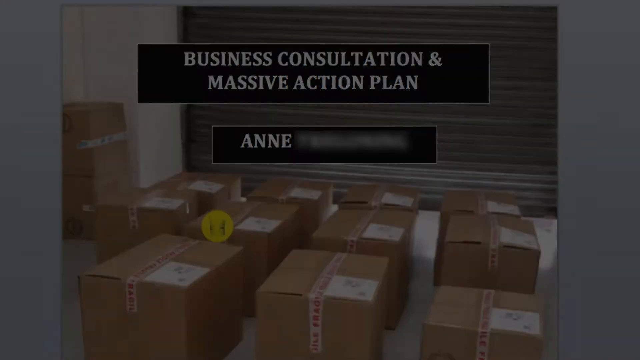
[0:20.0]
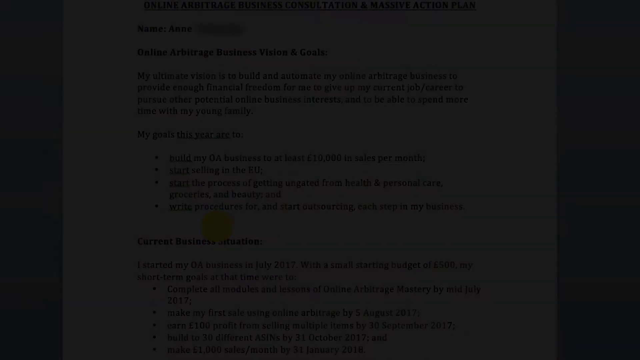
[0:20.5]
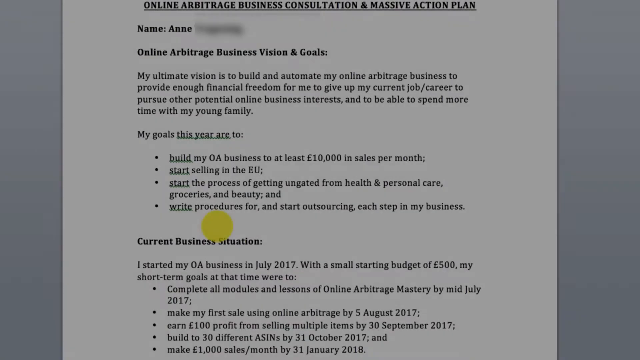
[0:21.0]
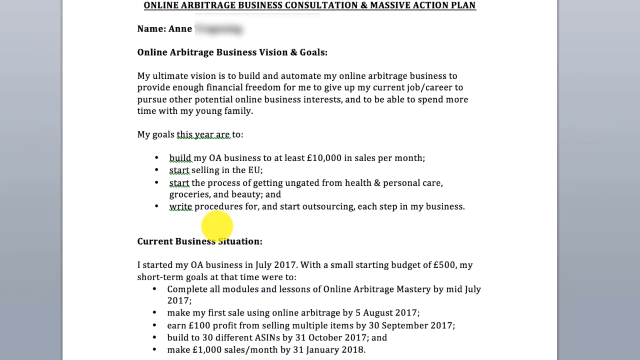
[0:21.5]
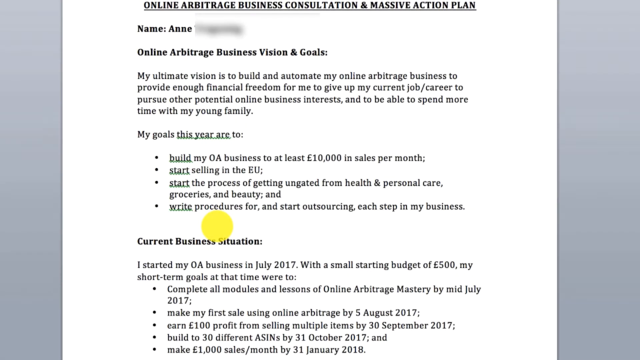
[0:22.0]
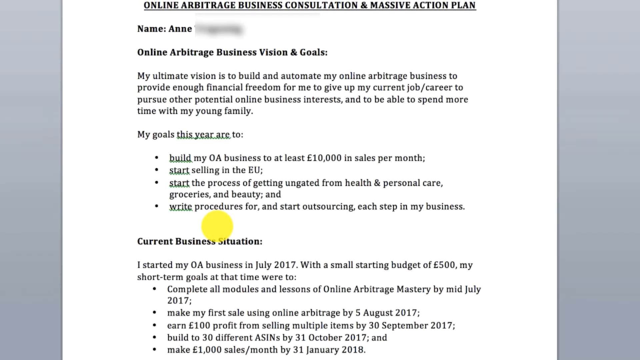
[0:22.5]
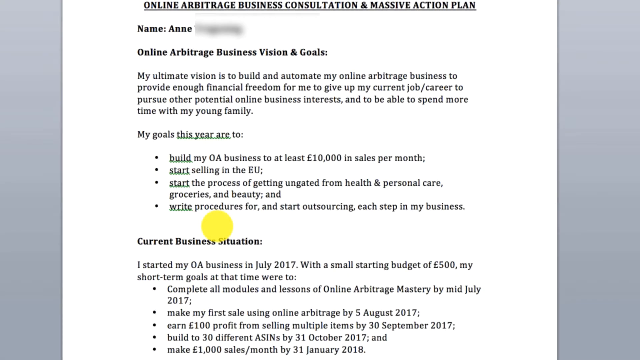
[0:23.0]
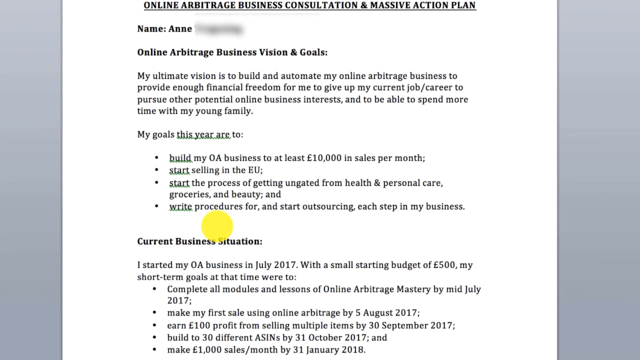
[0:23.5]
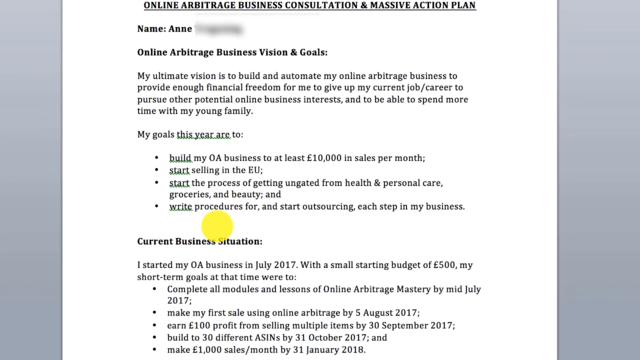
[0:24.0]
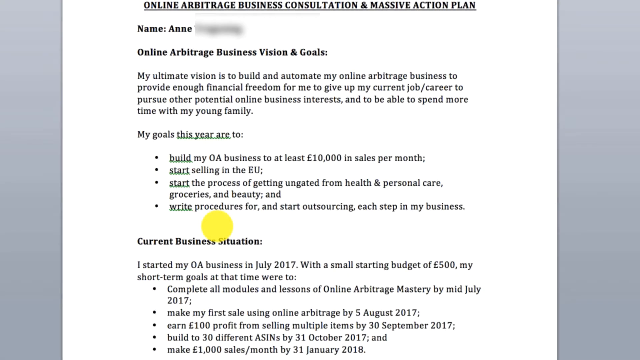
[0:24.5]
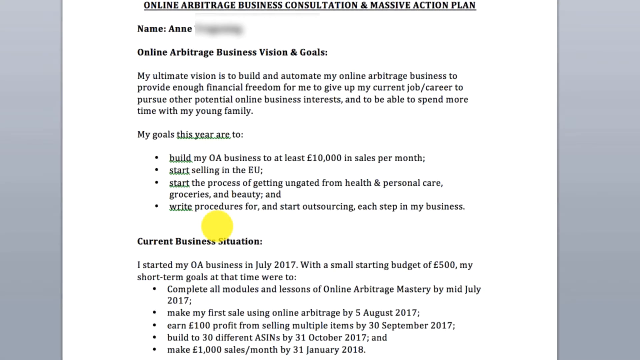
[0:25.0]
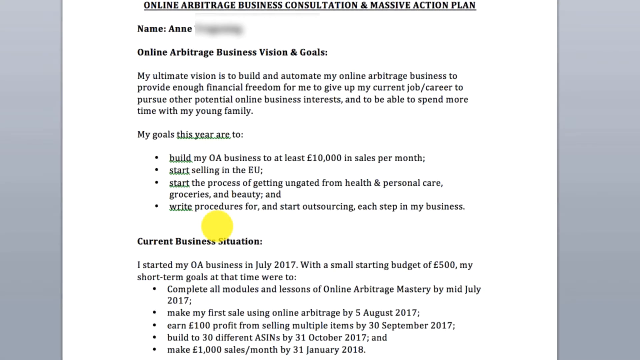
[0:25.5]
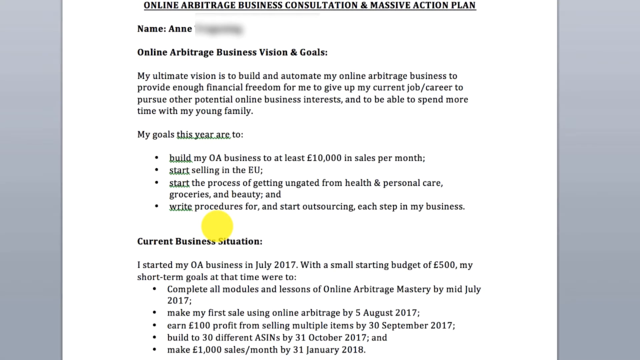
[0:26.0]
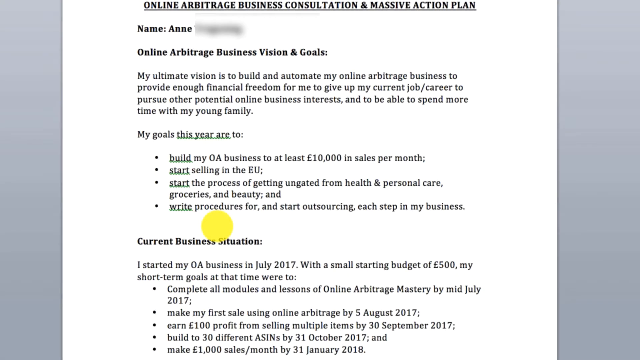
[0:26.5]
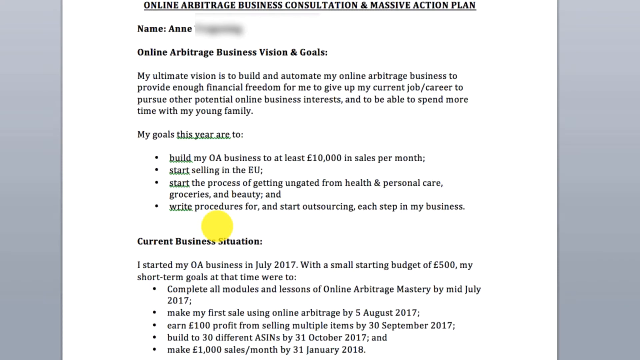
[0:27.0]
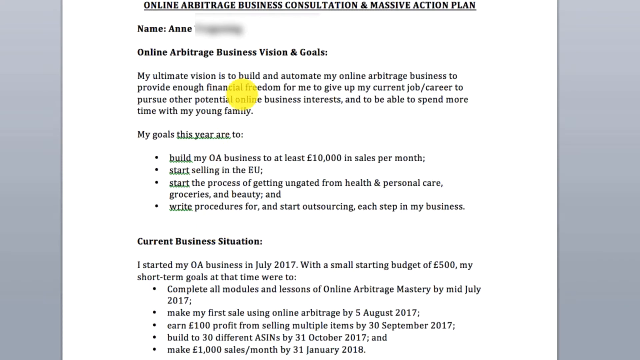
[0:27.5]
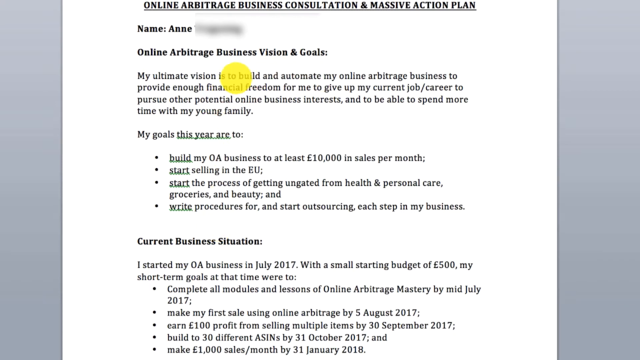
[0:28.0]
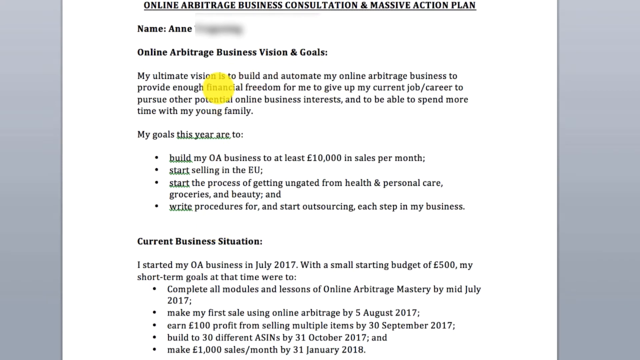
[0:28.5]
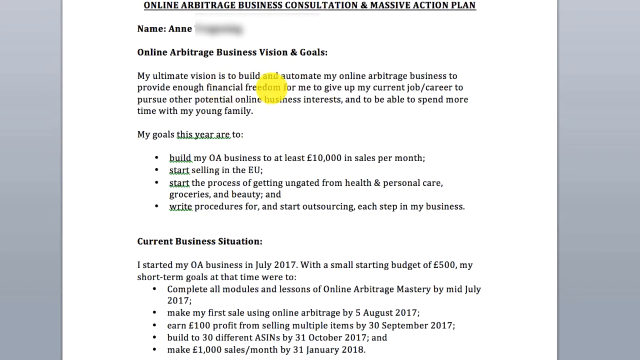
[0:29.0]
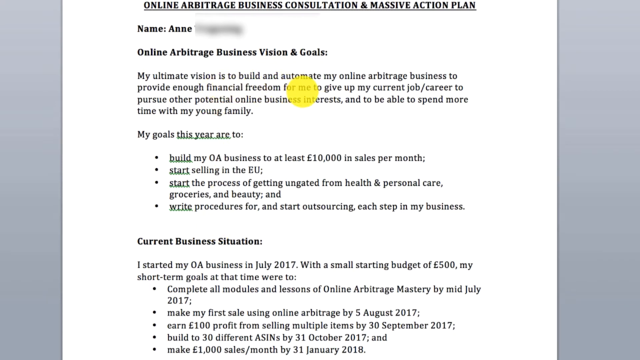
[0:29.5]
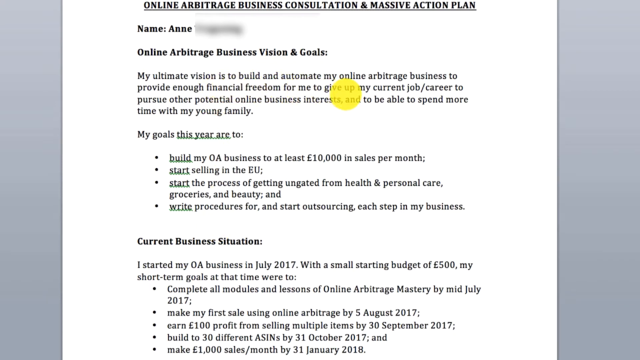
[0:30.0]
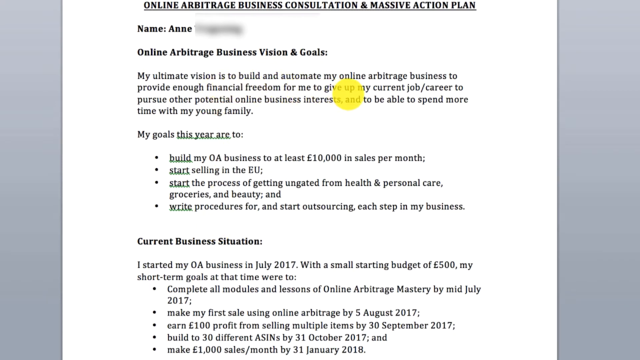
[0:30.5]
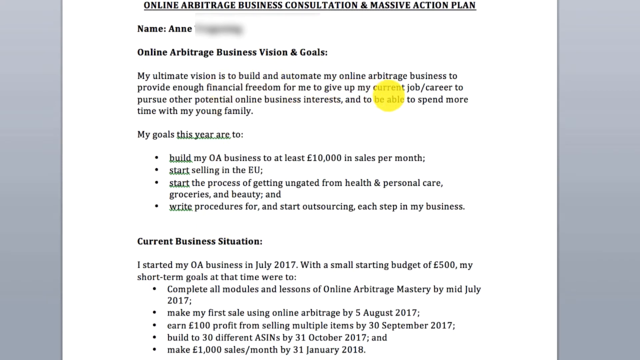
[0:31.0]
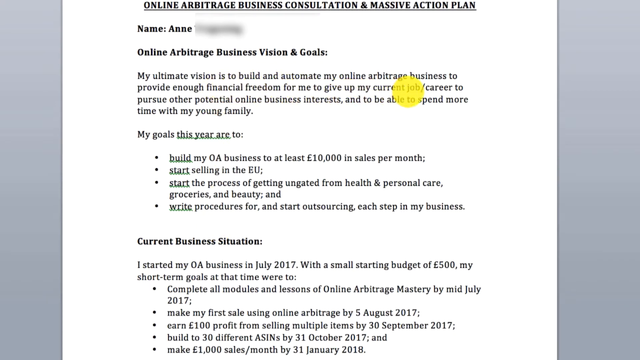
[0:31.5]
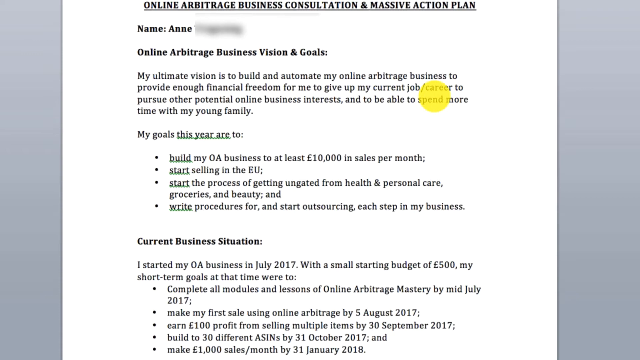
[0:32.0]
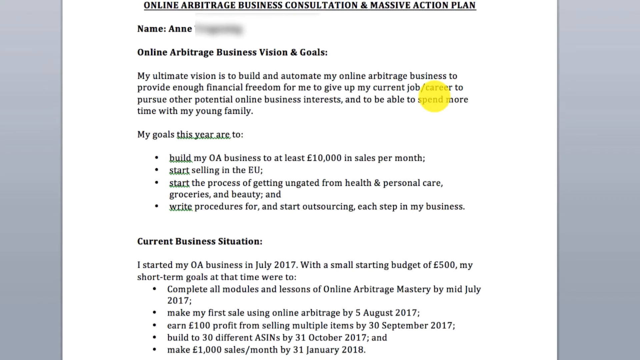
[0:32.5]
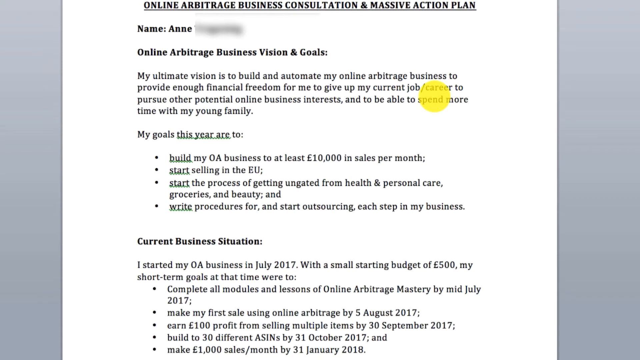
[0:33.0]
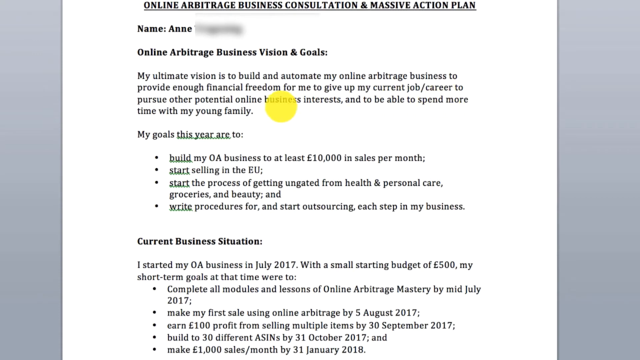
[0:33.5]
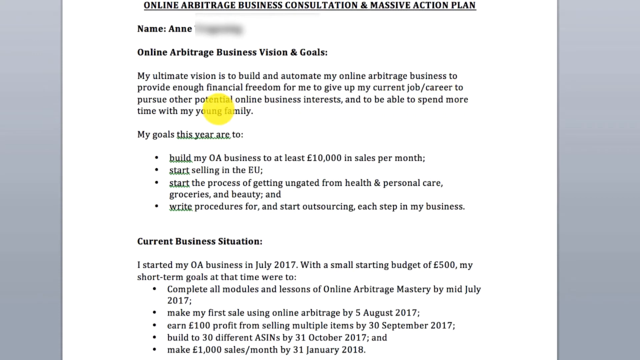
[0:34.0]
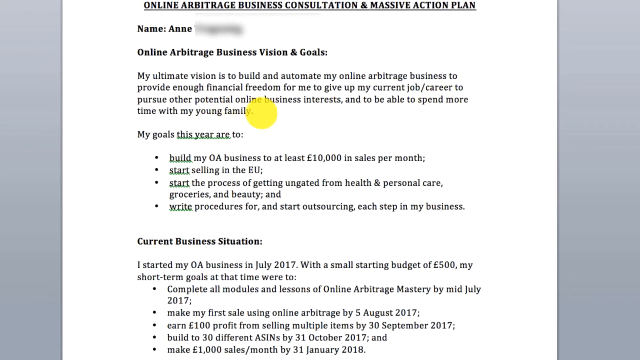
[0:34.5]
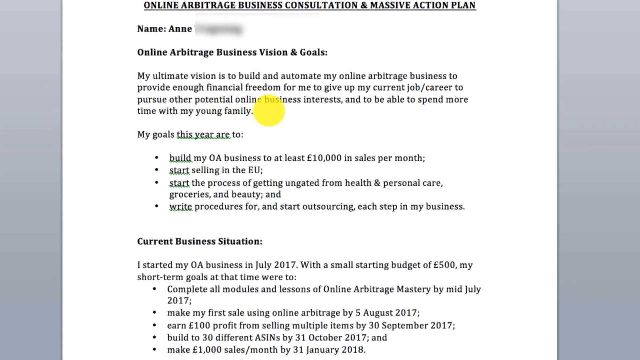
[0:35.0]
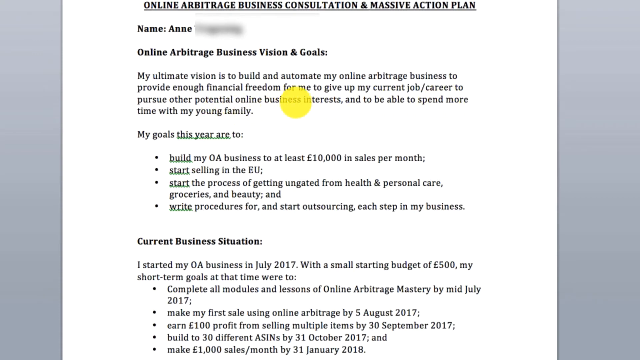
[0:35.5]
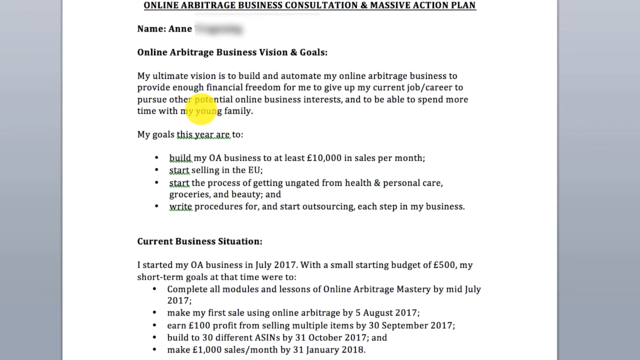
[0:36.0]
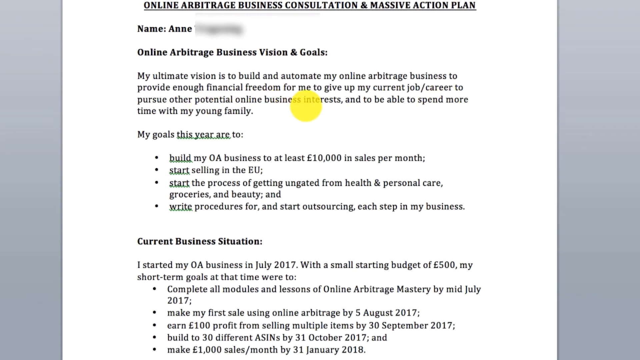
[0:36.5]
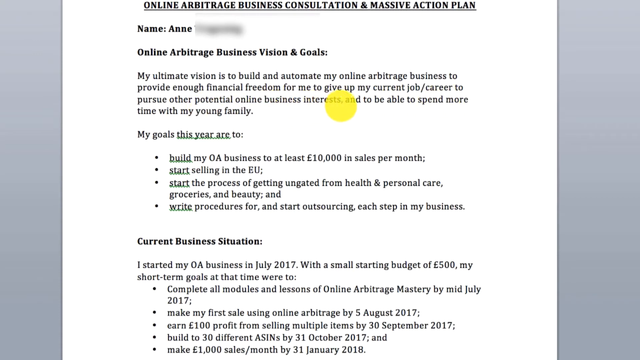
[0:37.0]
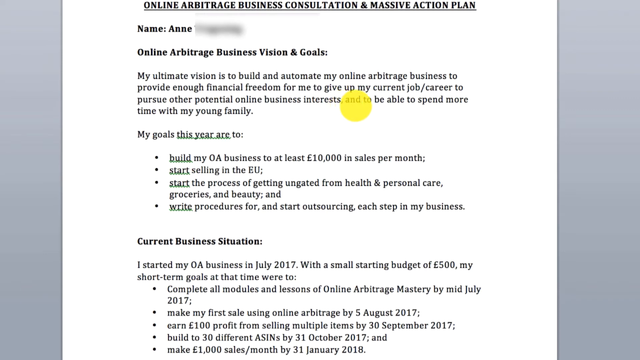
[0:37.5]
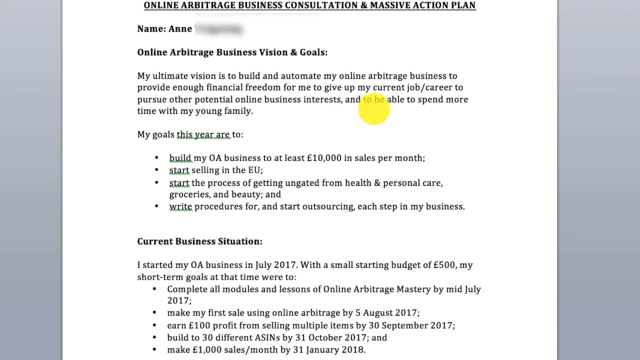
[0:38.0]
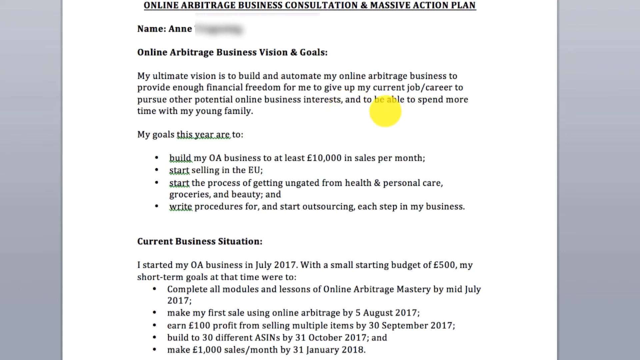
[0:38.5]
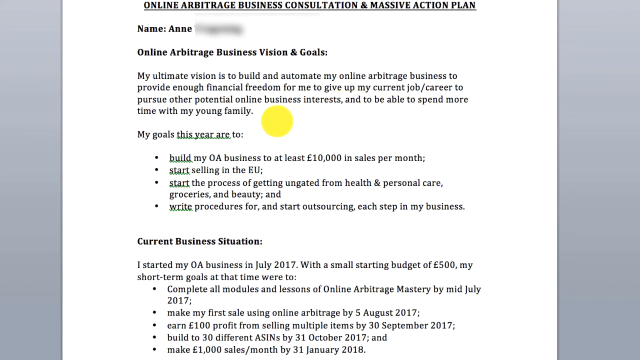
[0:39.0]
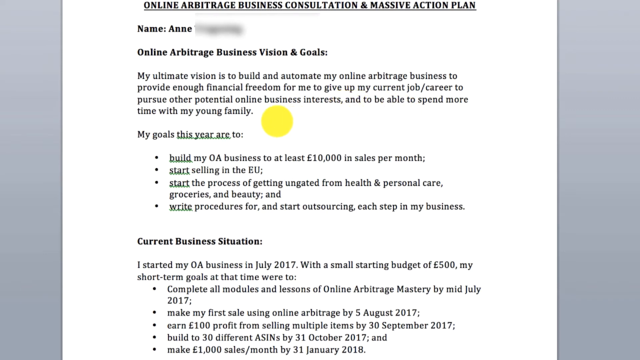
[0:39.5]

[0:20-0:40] The scene dissolves into what looks like a Word document. At the top, underlined and in all caps, it says "online arbitrage business consultation and massive action plan." Below is the name Ann with a redacted last name, followed by a section on online arbitrage business vision and goals that goes through this person's vision and goals, along with a current business situation at the bottom of the document. A yellow cursor is on the screen.